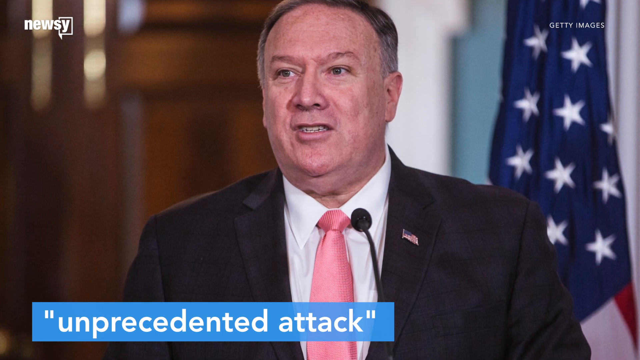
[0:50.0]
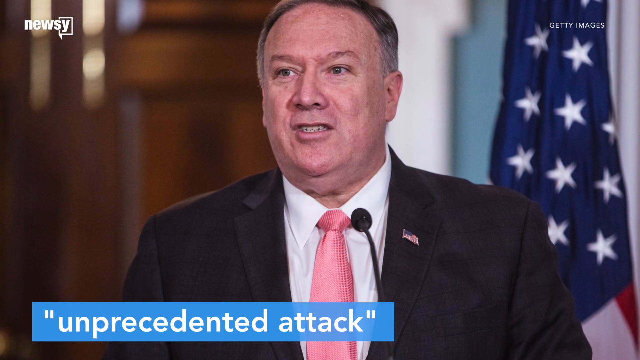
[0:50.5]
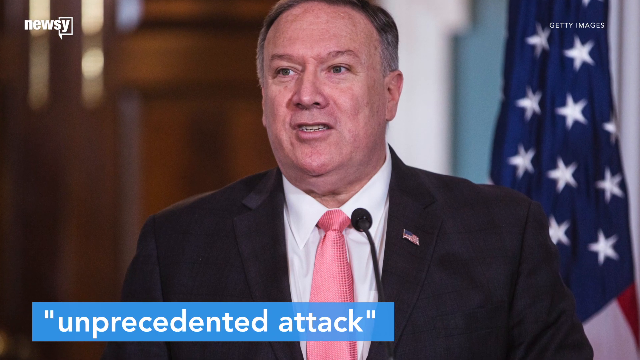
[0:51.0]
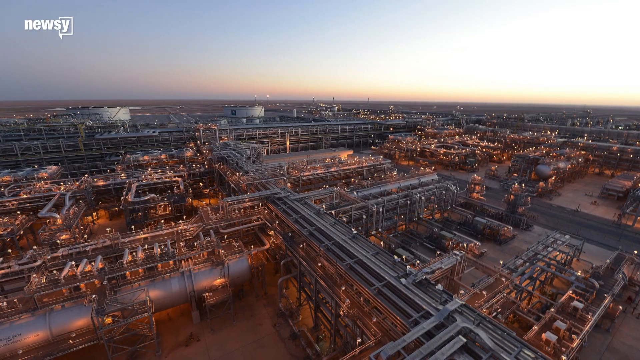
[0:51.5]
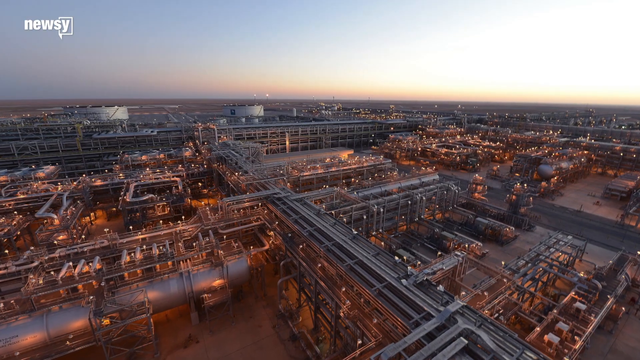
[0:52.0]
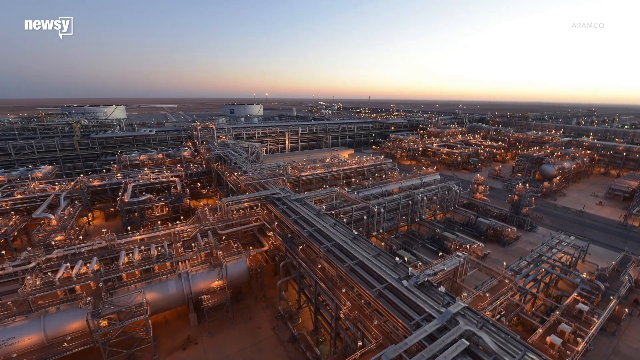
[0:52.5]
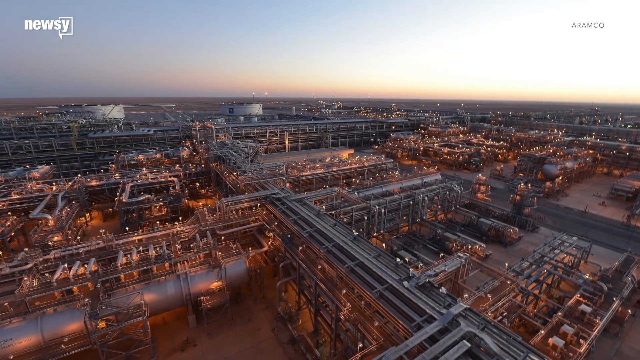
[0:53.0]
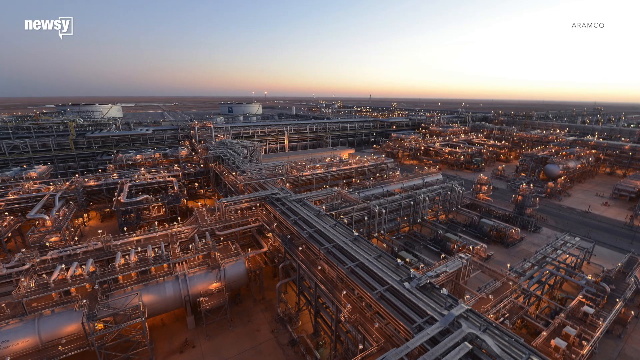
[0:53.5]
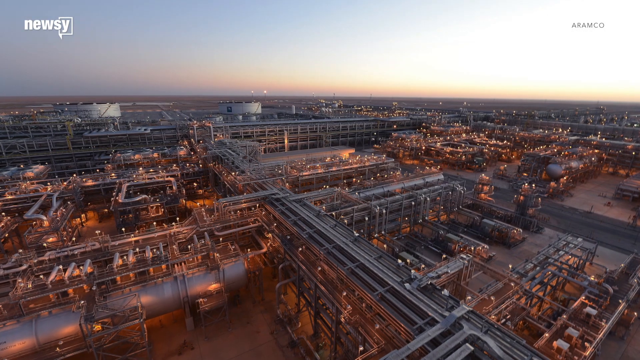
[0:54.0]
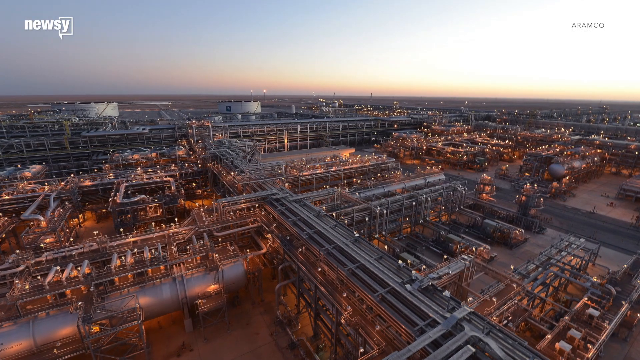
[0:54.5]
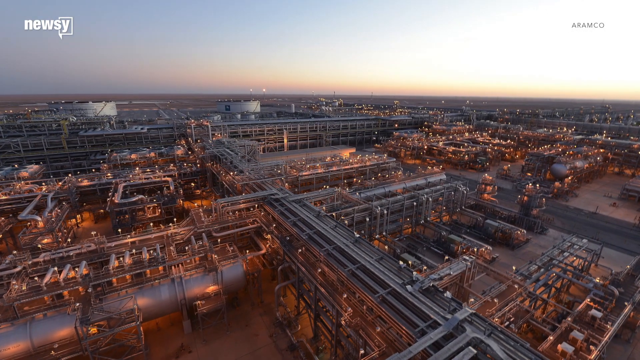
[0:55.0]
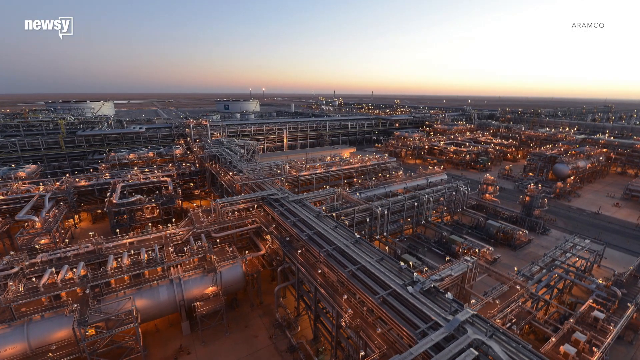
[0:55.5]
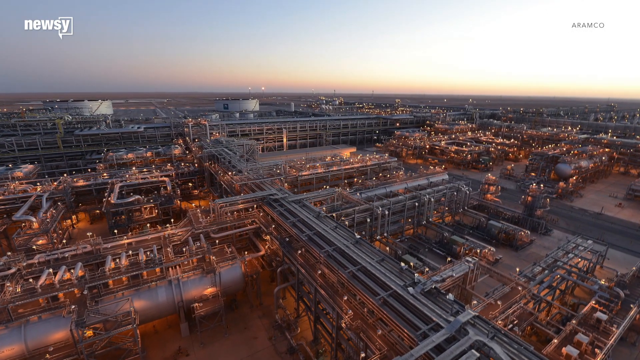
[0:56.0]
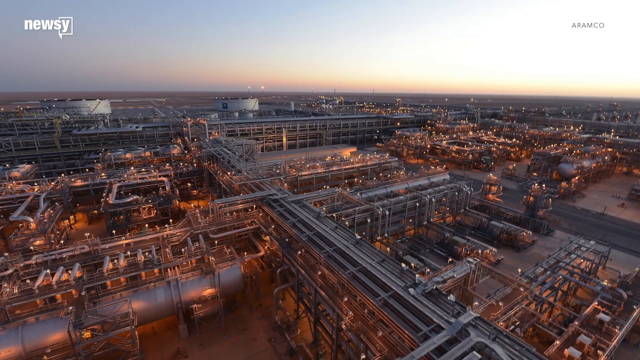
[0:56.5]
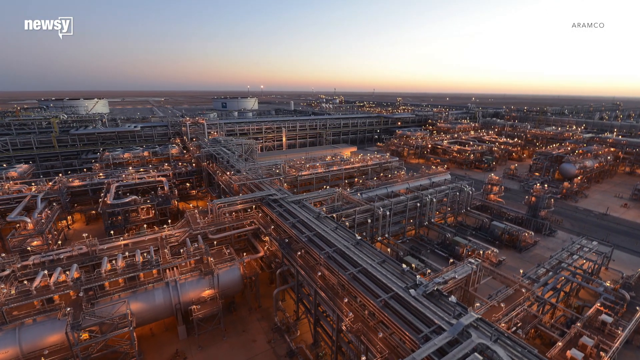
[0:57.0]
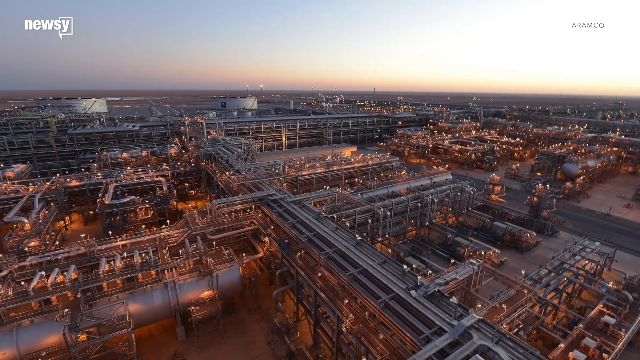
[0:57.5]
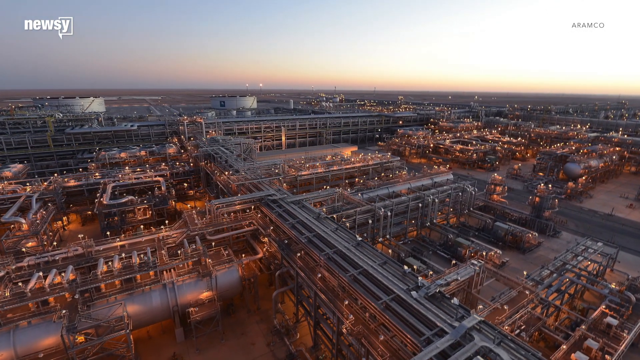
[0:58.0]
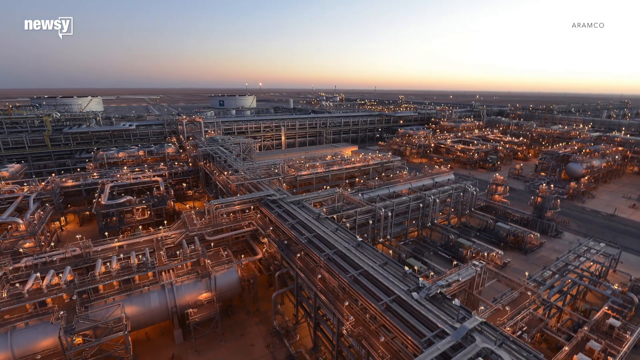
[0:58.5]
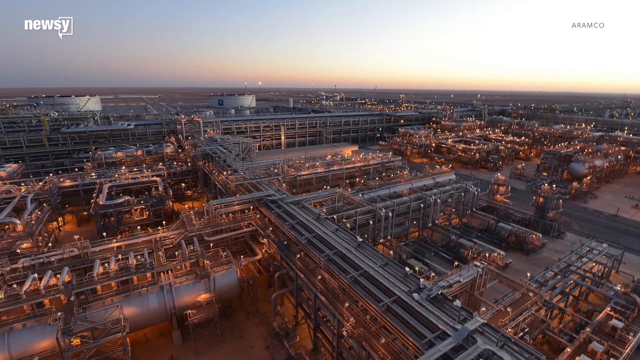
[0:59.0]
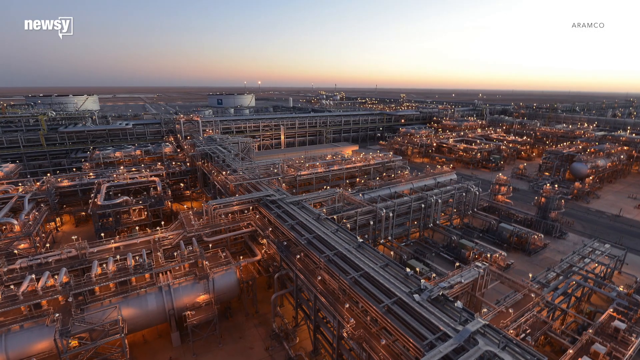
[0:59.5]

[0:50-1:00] The photo of Secretary Pompeo is on screen with a blue box at the bottom containing white text that reads "unprecedented attack" in quotation marks. An overhead shot follows of what looks like some sort of power plant, possibly a nuclear power plant, perhaps in the Middle East. The video then comes back to the photo of Pompeo, who looks on high alert and very concerned. Behind his left shoulder is an American flag, its blue part with white stars visible, and on the other side behind him are wood doors with shiny brass handles.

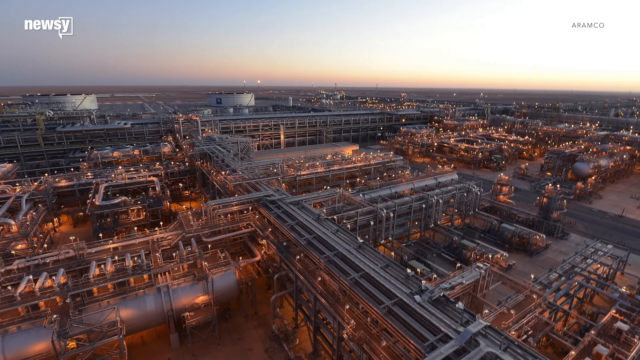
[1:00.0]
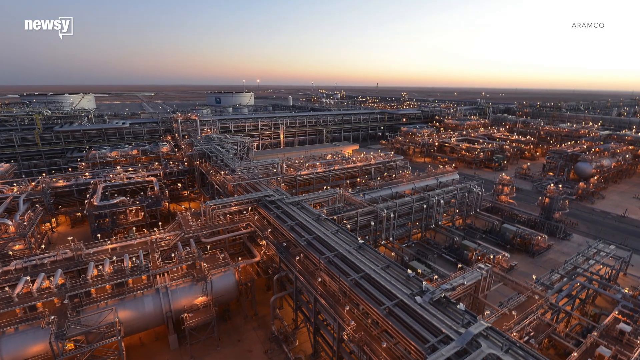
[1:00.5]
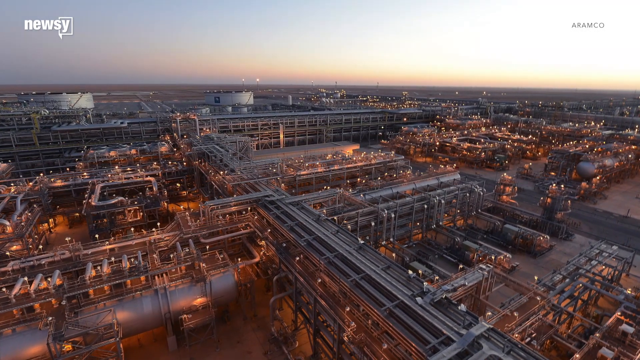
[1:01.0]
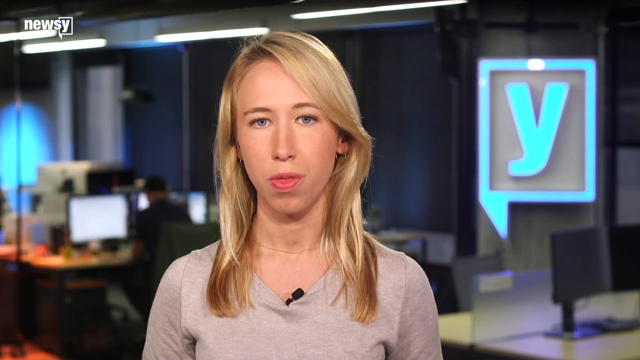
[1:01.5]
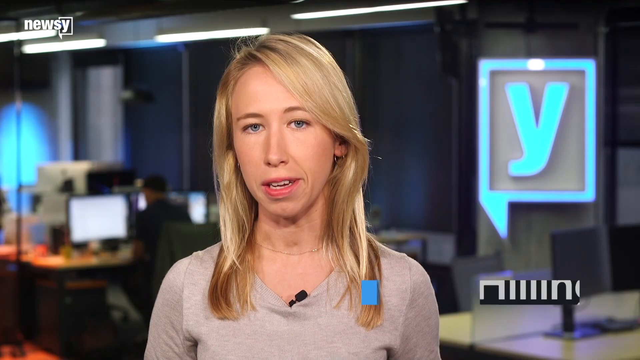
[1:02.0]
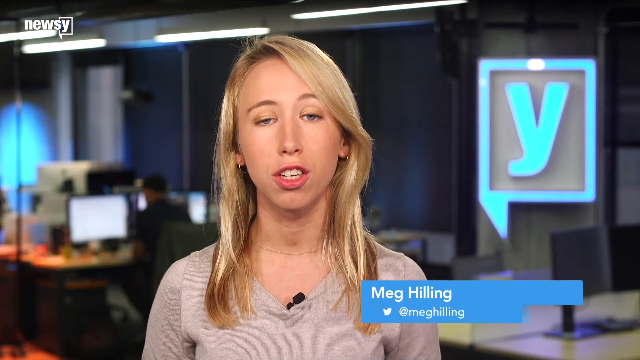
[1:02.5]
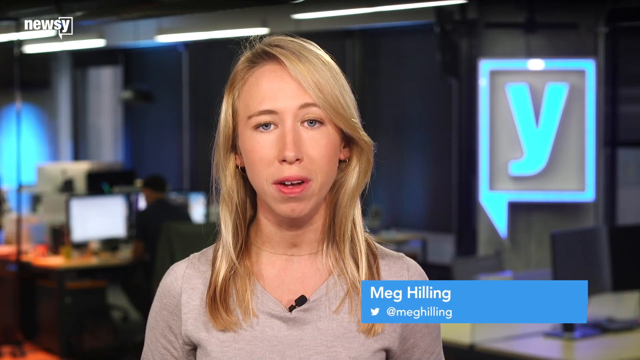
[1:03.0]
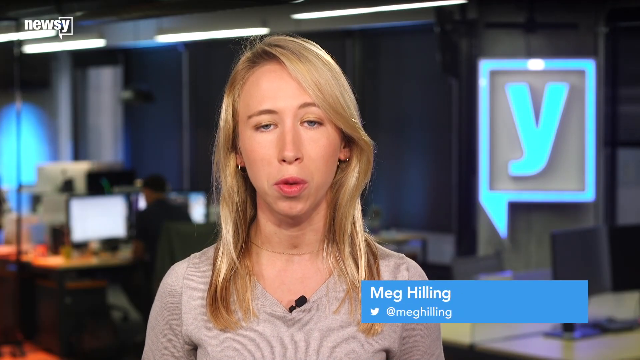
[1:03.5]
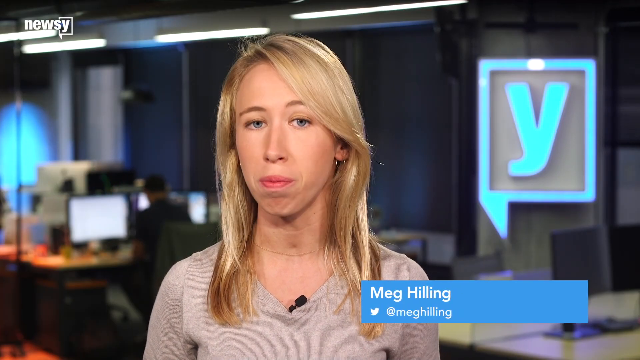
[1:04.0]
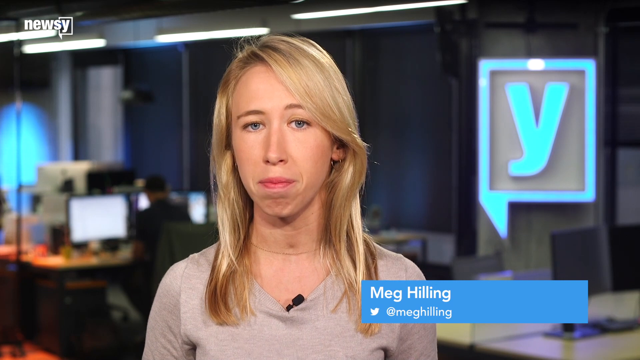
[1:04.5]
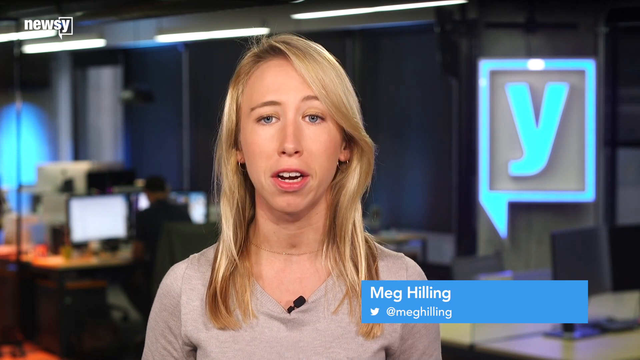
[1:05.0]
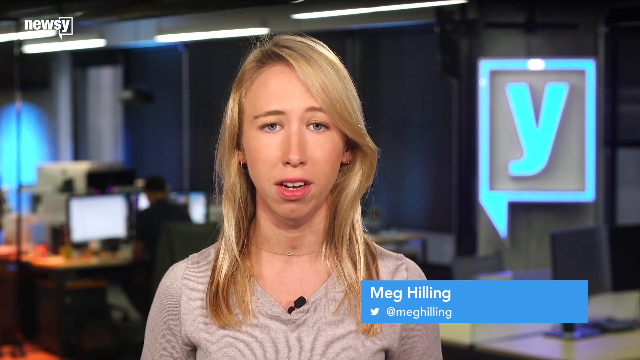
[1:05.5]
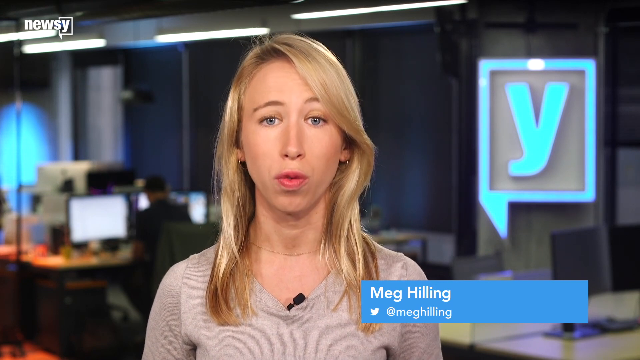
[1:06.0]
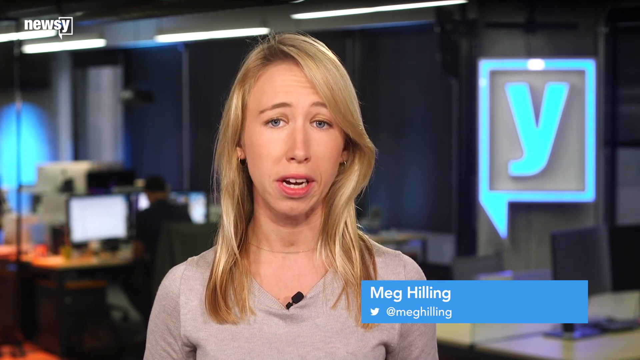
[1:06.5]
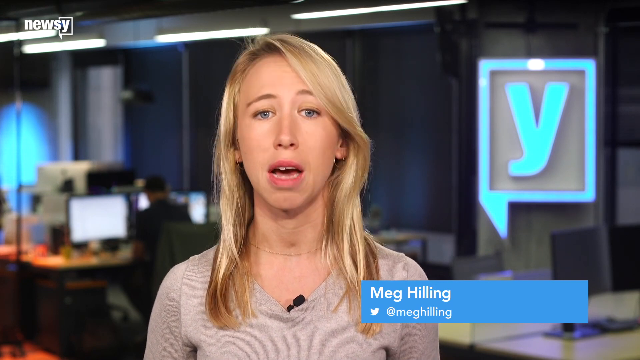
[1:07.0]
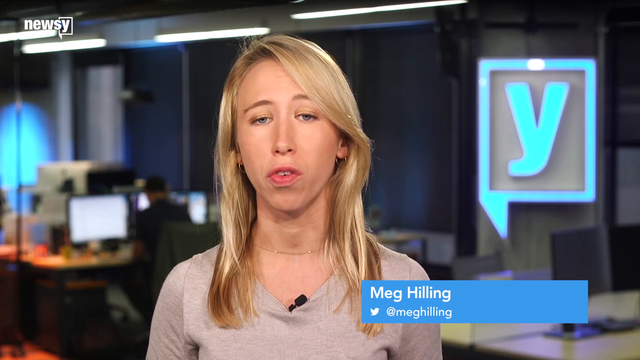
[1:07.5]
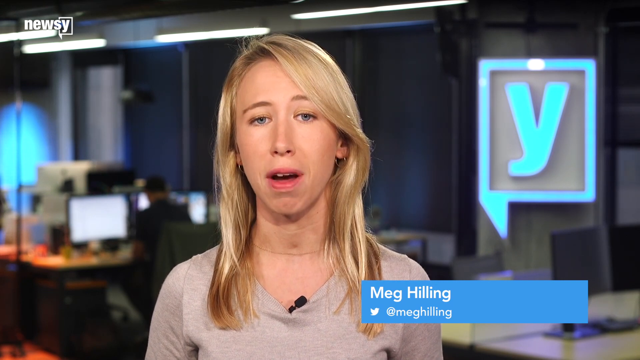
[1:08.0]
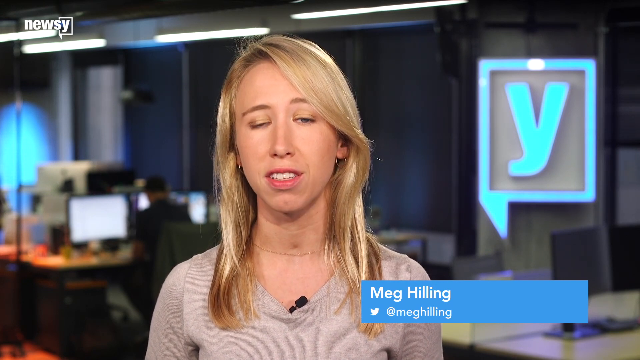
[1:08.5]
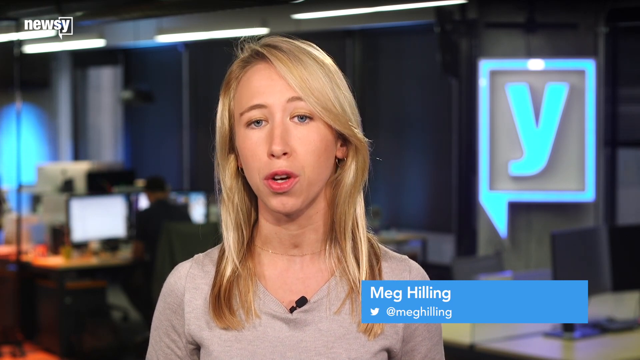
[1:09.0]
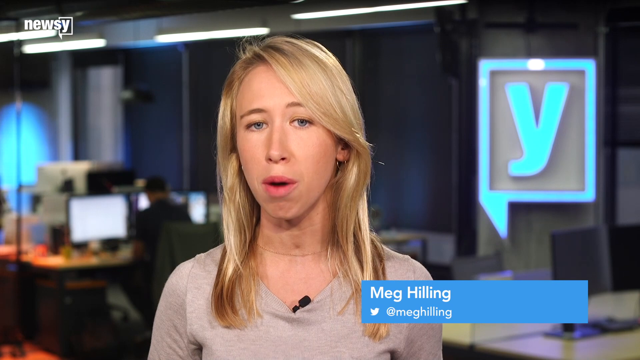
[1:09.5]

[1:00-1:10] The overhead shot of what appears to be a power plant is shown. A newscaster named Meg Hilling, whose Twitter is at Meg Hilling, then appears, with parts of the newsroom behind her and other people working at their desks. She seems young, maybe mid to late 20s or early 30s, with straight blonde hair, blue eyes, and minimal makeup, and she wears a beige shirt. She is talking, presumably giving a report on the news story.